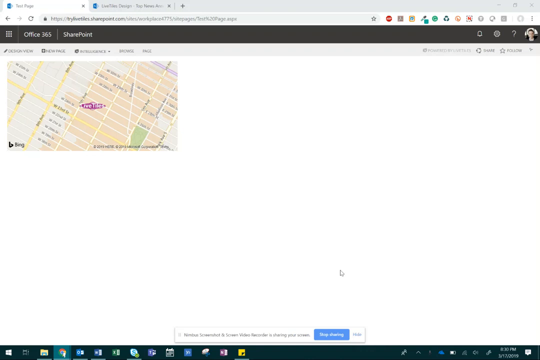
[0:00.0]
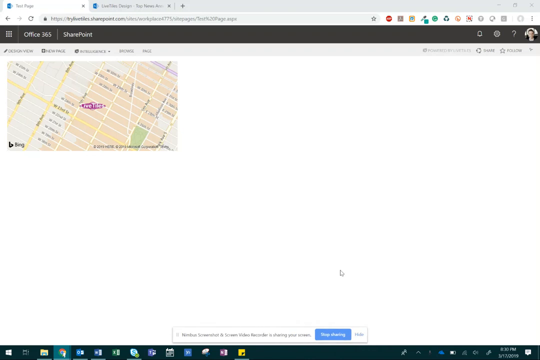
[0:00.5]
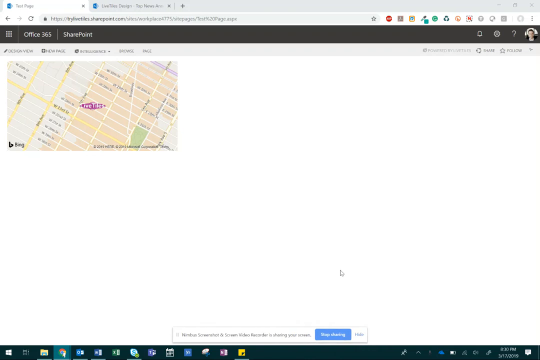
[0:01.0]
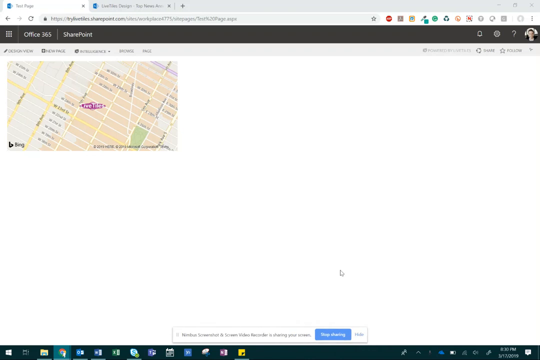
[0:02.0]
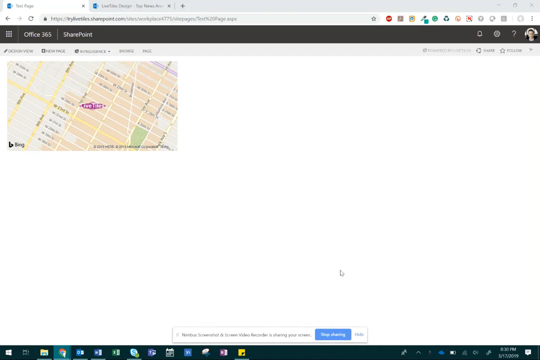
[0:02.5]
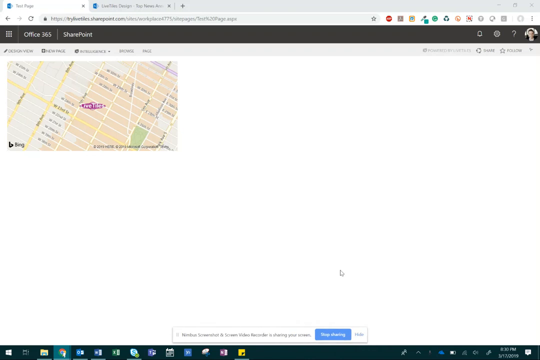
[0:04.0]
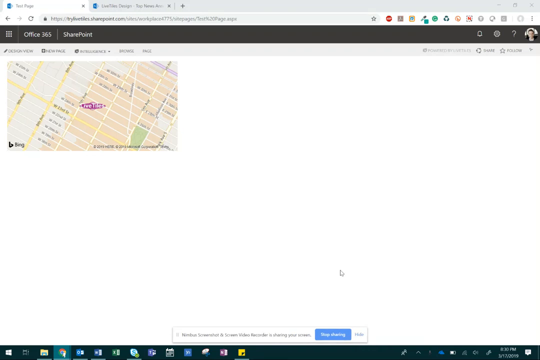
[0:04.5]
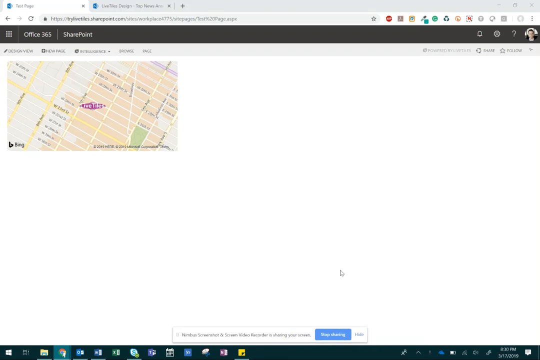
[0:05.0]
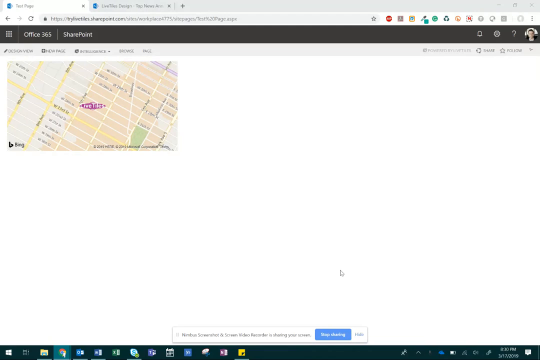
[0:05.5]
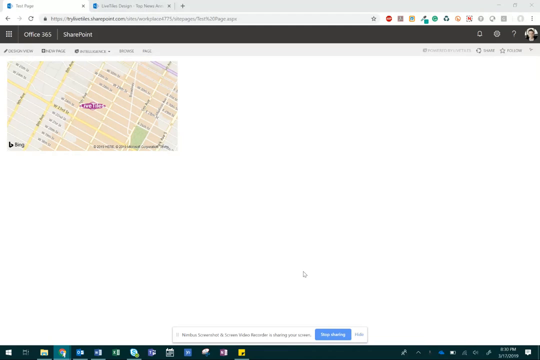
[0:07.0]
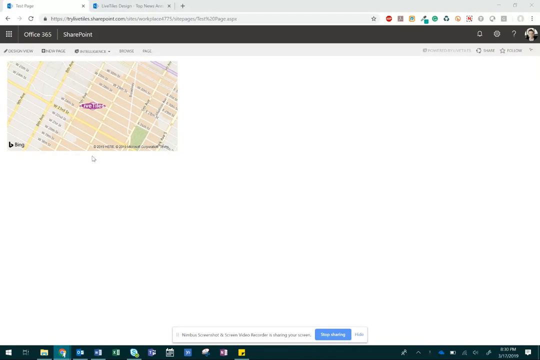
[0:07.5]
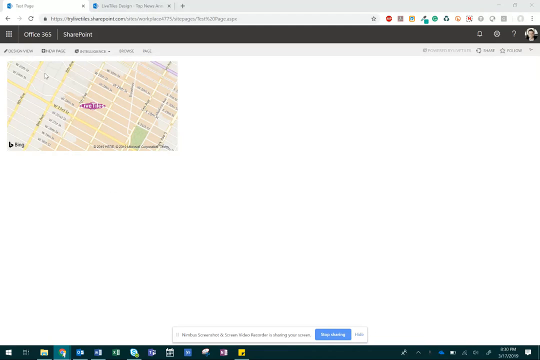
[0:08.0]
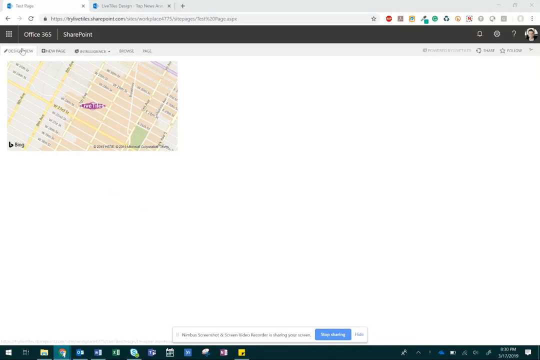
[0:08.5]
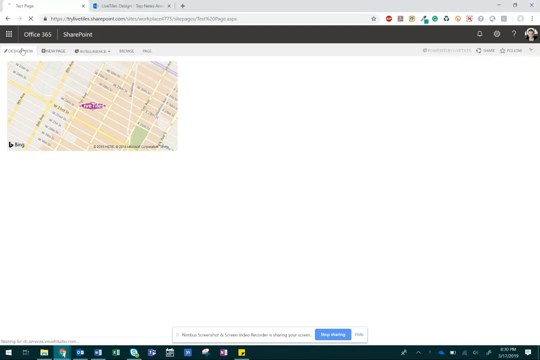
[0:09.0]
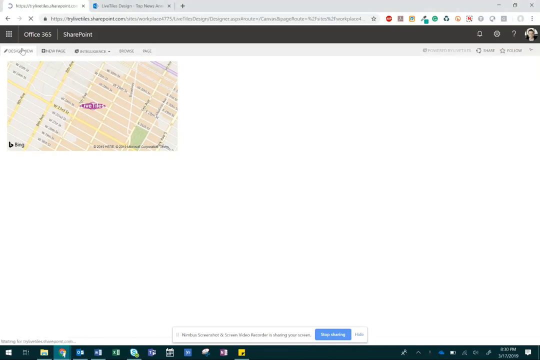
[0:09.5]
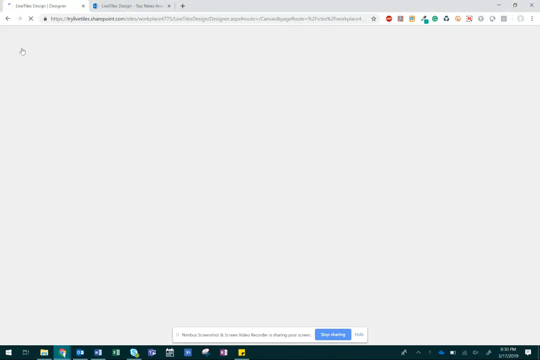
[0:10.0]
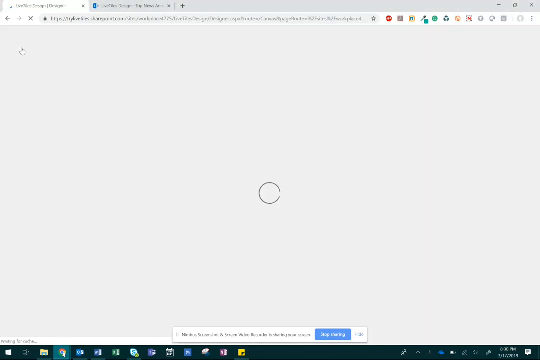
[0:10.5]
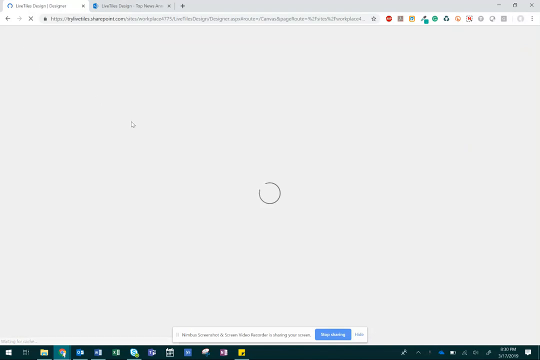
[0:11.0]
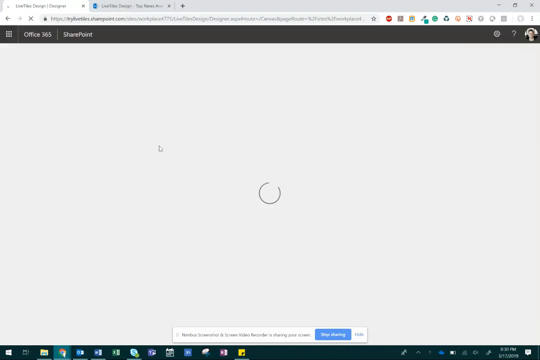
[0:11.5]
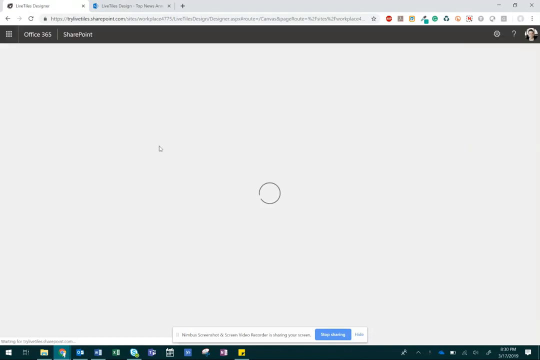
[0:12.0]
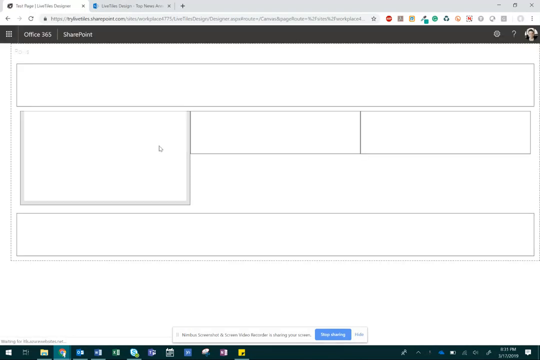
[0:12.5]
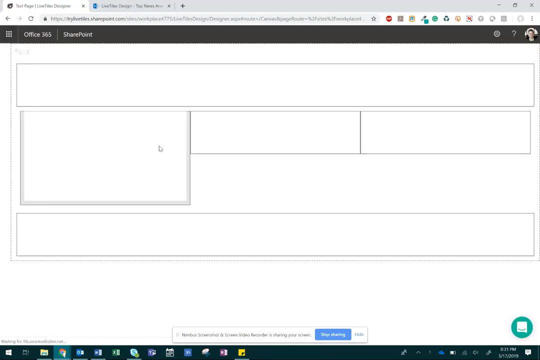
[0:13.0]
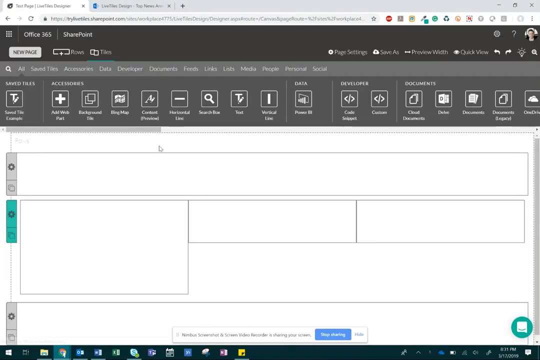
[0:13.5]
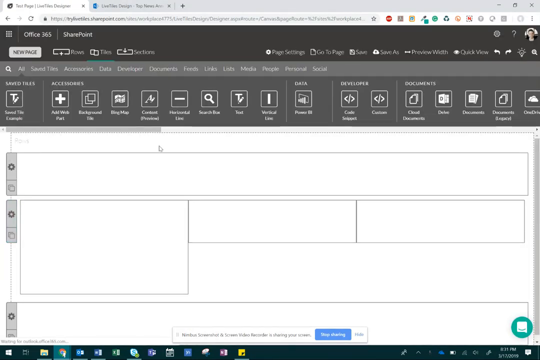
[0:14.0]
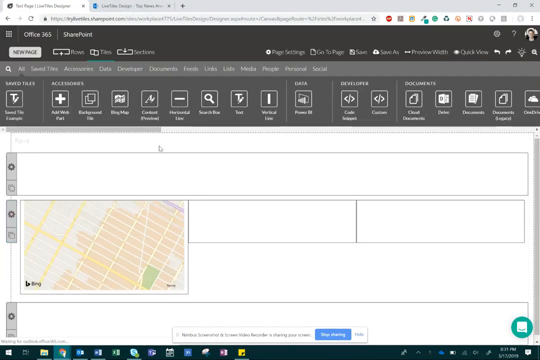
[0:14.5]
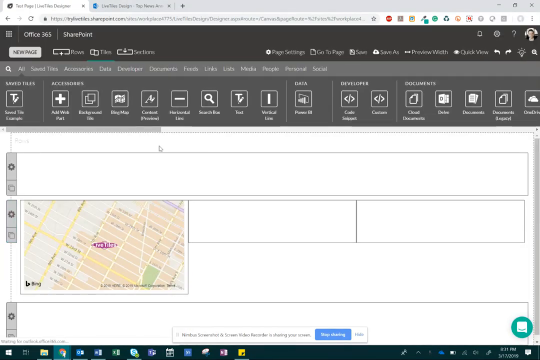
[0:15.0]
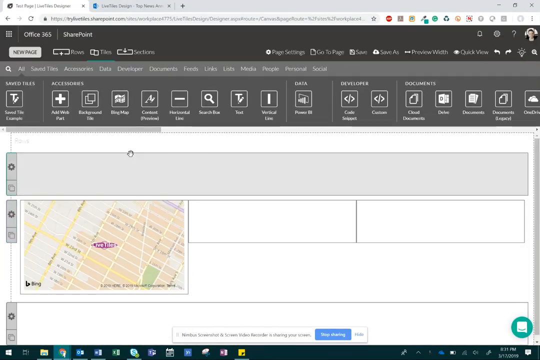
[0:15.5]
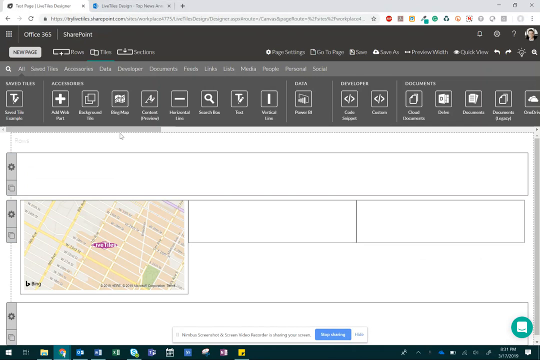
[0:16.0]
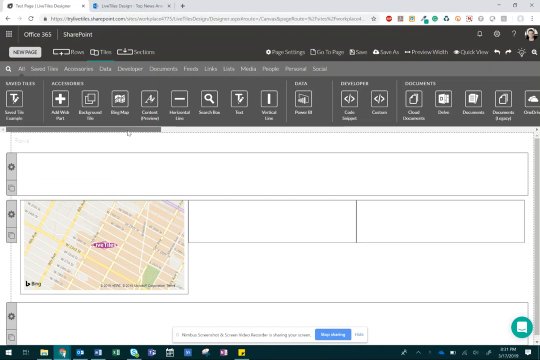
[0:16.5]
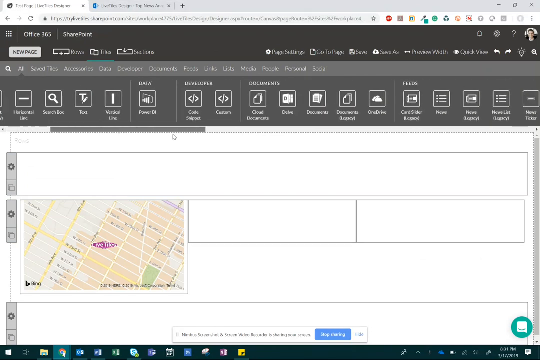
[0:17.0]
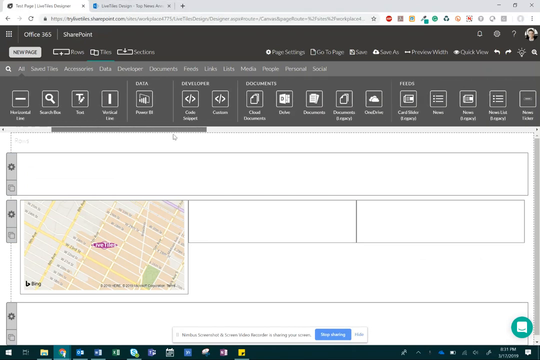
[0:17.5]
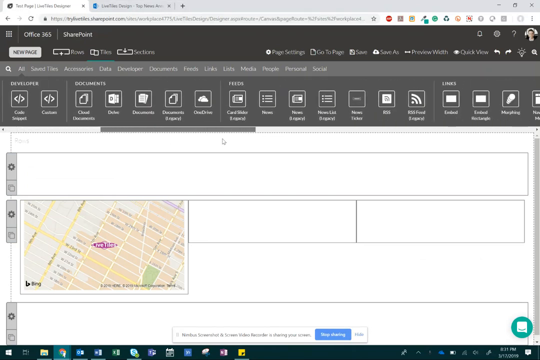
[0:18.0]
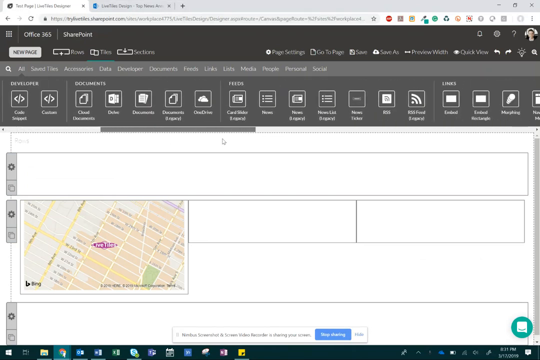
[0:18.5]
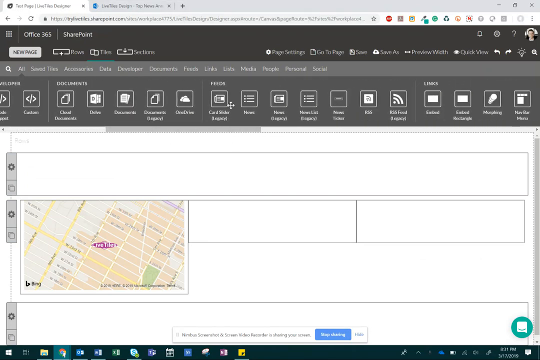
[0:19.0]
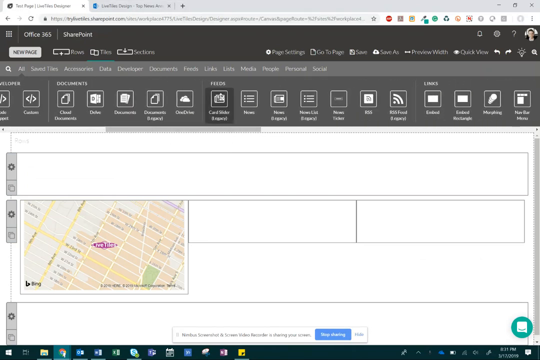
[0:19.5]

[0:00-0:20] A website is shown with a map icon on the top left; the rest of the website has a clear white background. Toward the bottom of the page, the background color transitions to silver and then to a darker shade of black. Among the tabs visible on the website are Office 365 and SharePoint. Two windows are open. Notable bookmarks include The Drive and Netflix, among 6 or 7 other icons. A loading page with a silver background then appears. Text at the bottom shows that the person is sharing their screen. After the transition, the map is still visible on the page, which is now broken up into various triangles and rectangles across the screen, with more options at the top. The mouse drags to the right.